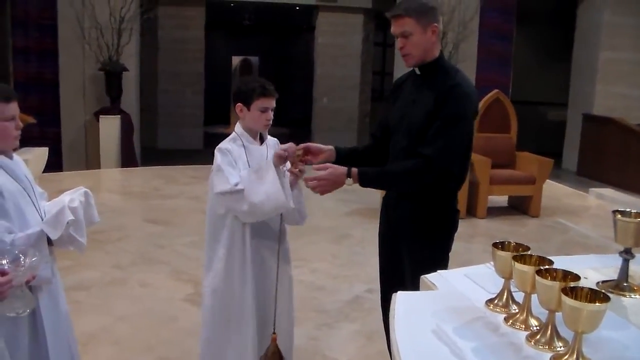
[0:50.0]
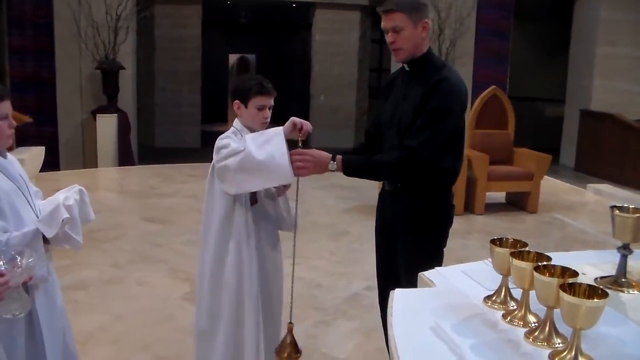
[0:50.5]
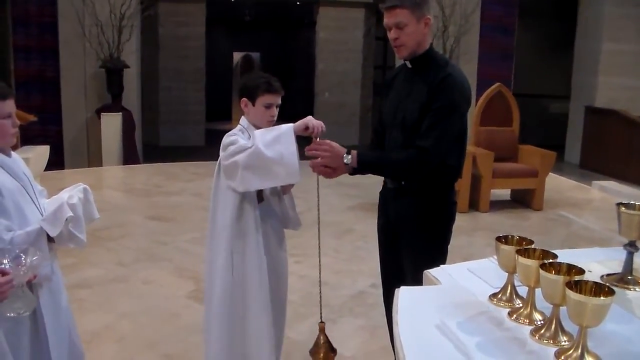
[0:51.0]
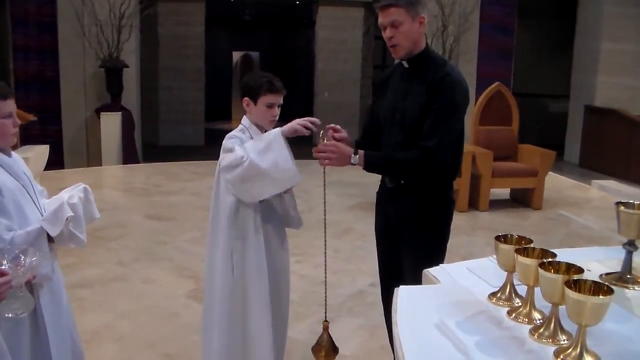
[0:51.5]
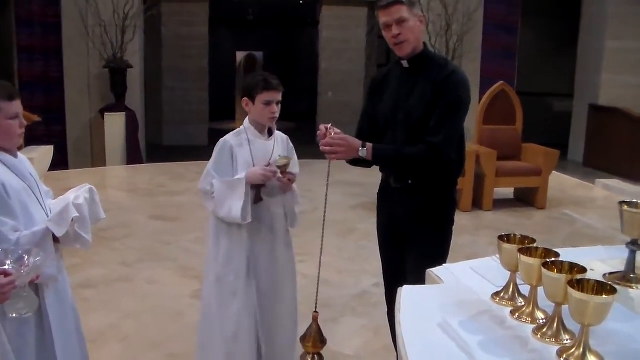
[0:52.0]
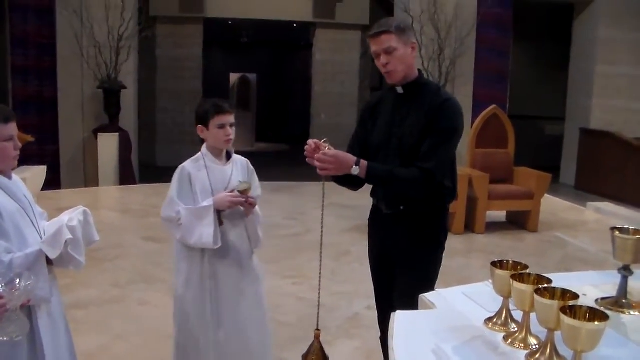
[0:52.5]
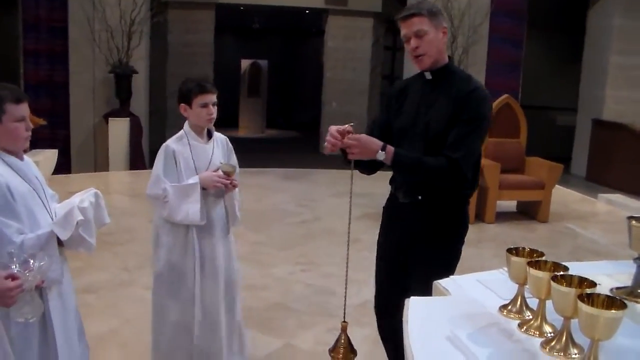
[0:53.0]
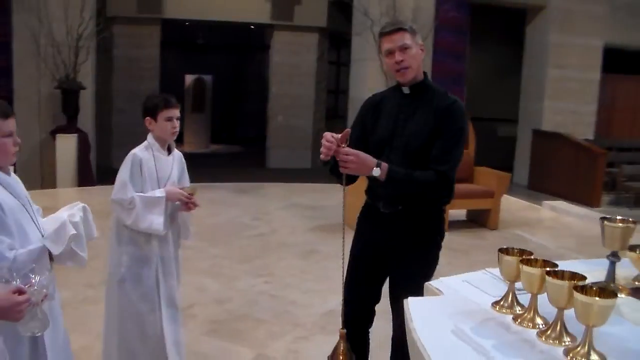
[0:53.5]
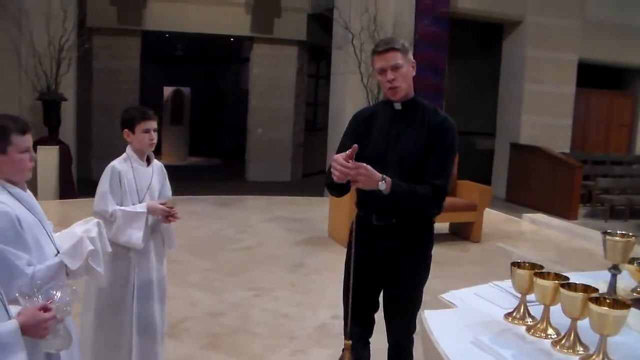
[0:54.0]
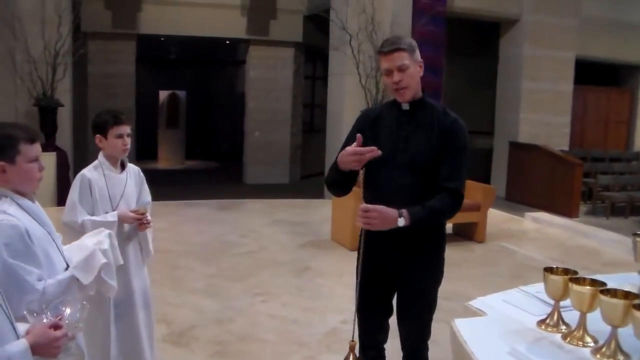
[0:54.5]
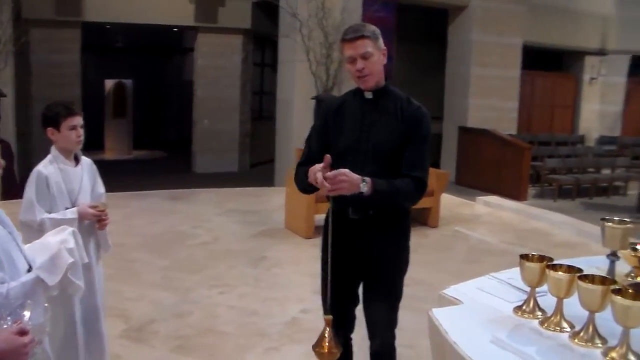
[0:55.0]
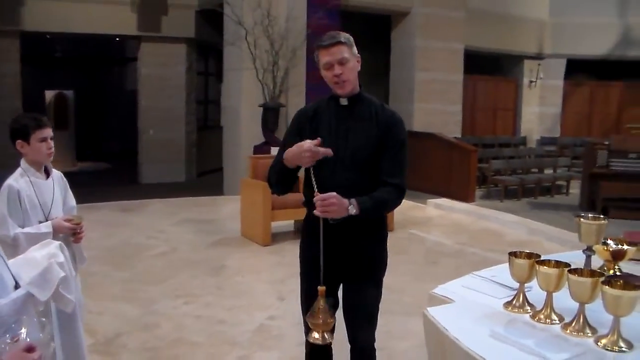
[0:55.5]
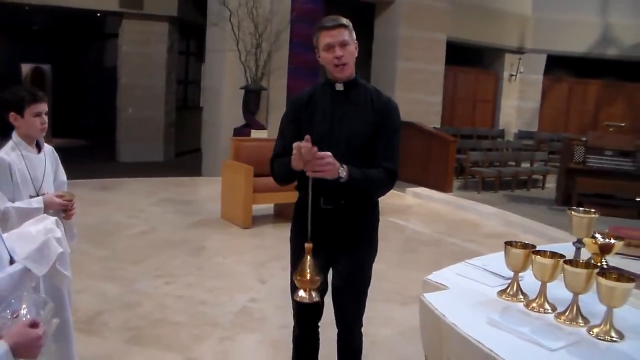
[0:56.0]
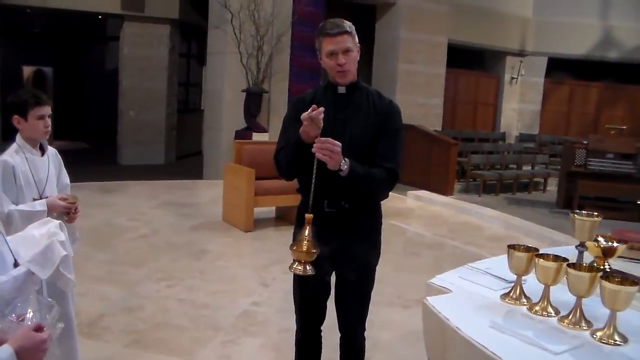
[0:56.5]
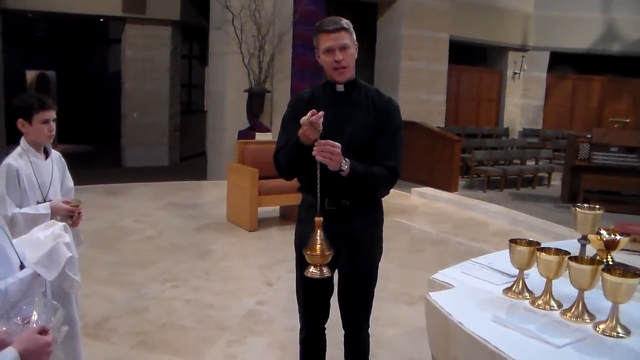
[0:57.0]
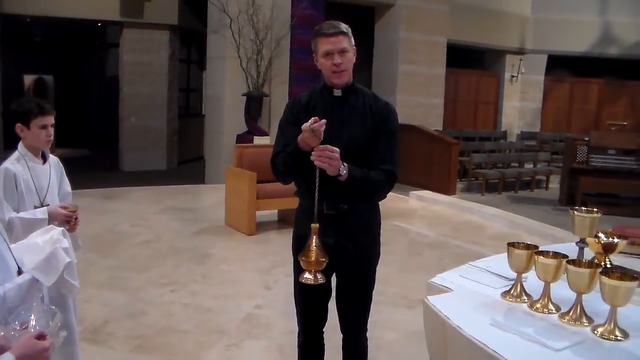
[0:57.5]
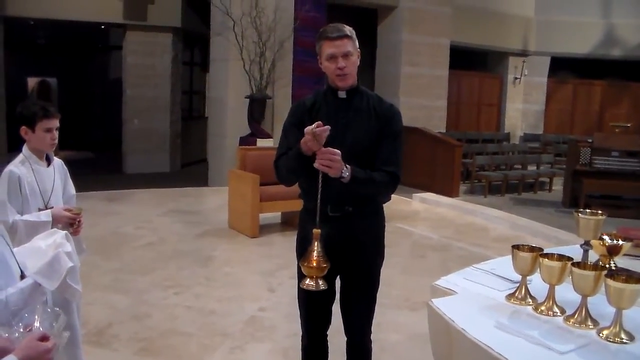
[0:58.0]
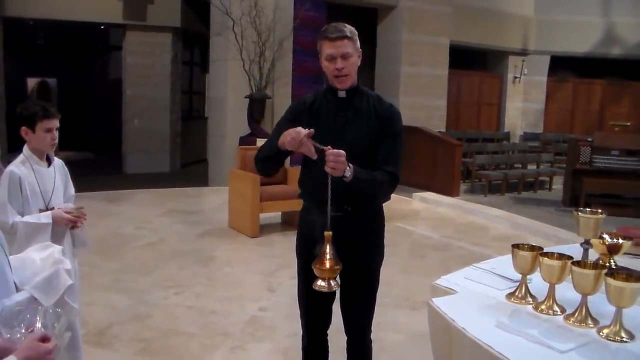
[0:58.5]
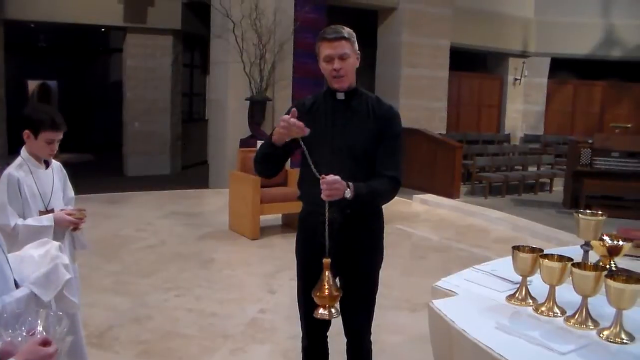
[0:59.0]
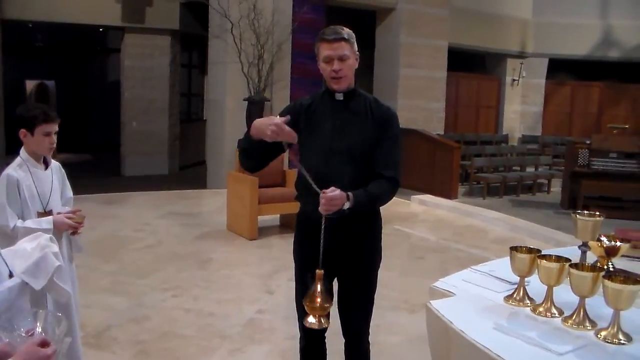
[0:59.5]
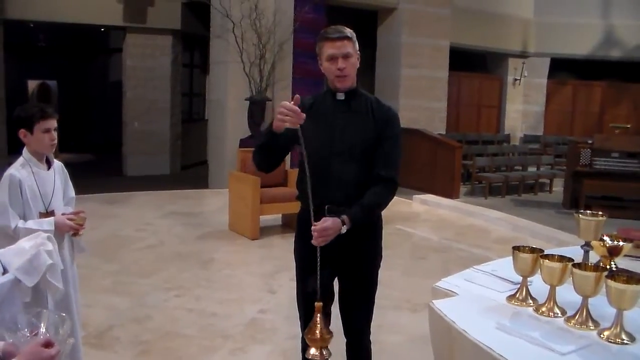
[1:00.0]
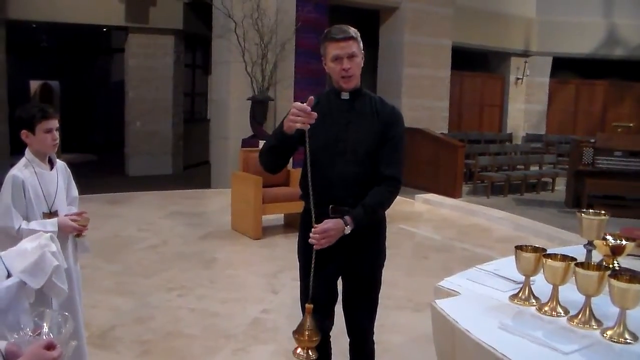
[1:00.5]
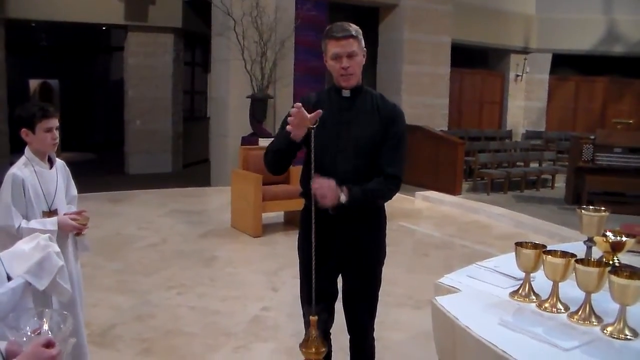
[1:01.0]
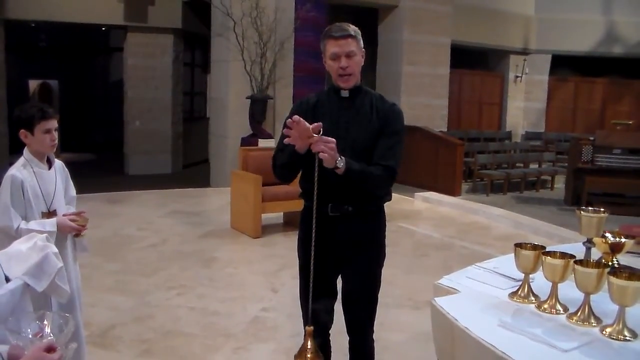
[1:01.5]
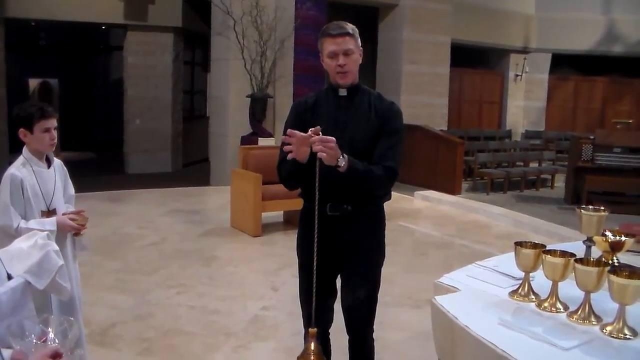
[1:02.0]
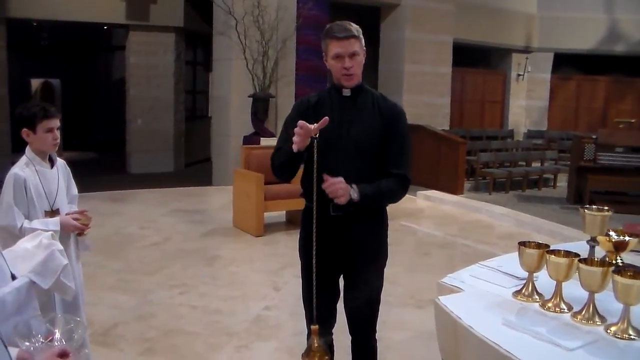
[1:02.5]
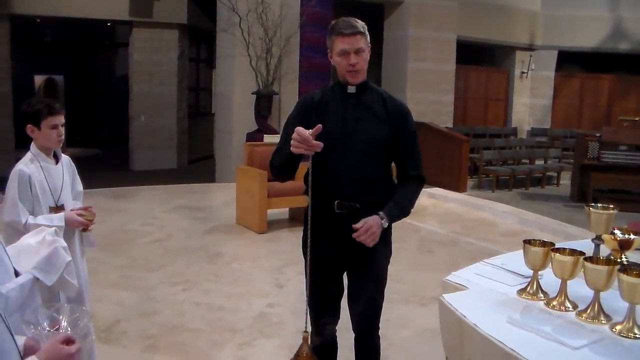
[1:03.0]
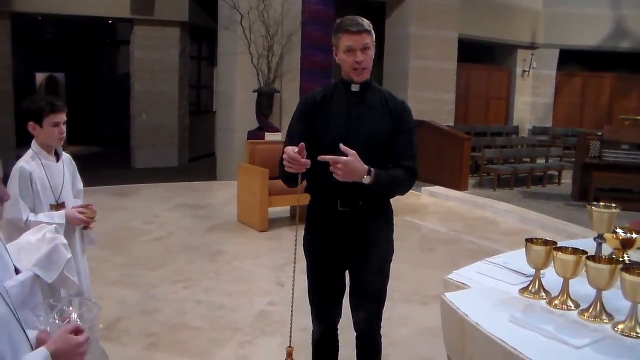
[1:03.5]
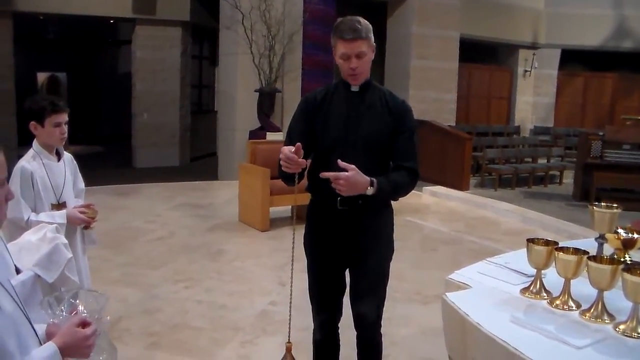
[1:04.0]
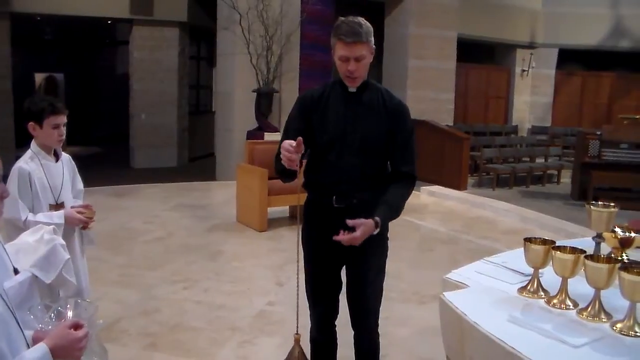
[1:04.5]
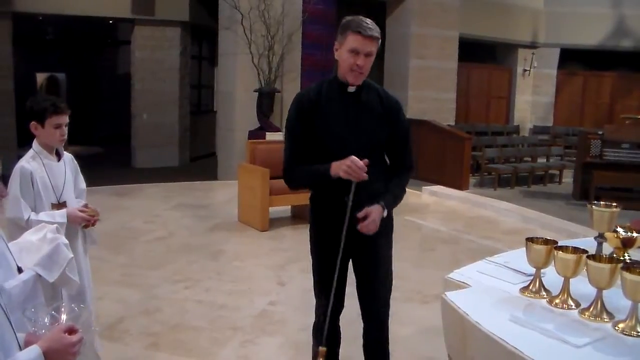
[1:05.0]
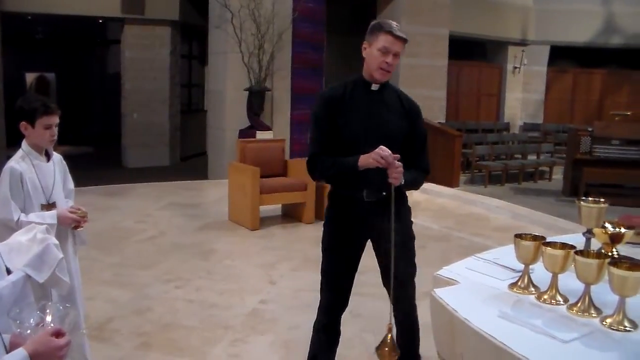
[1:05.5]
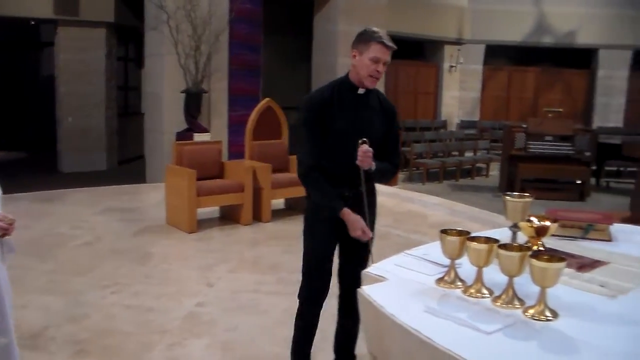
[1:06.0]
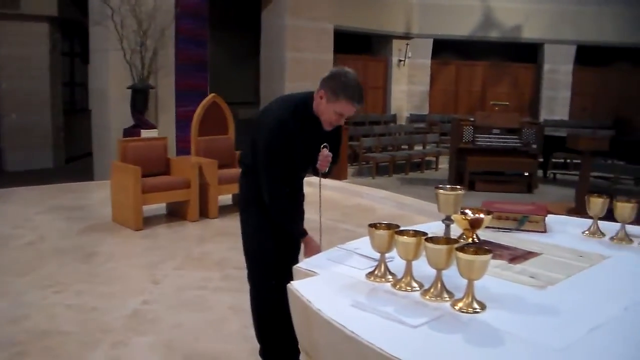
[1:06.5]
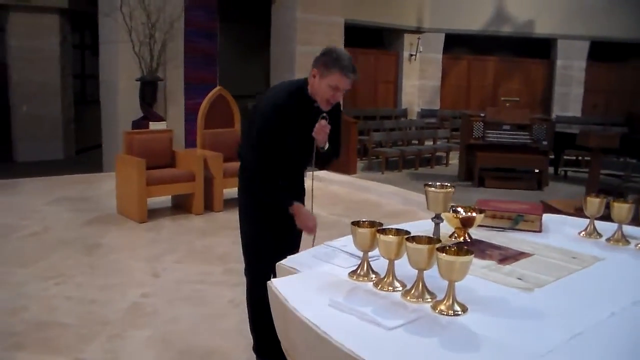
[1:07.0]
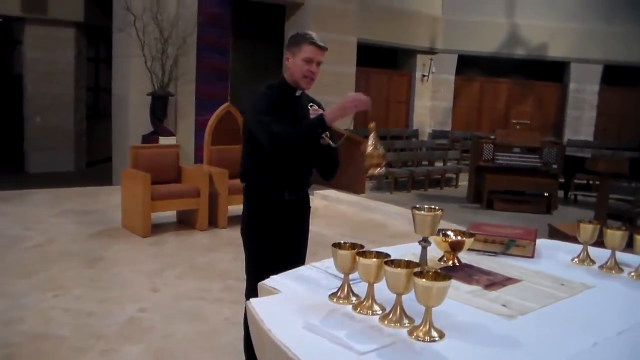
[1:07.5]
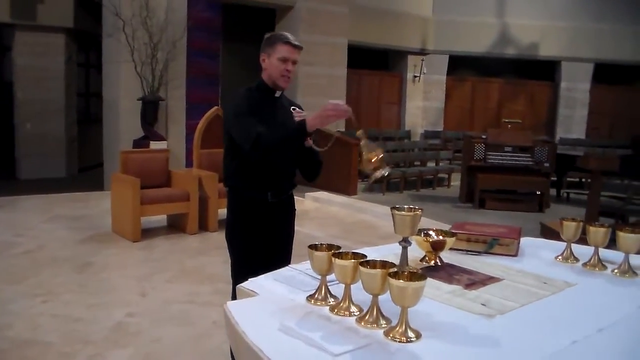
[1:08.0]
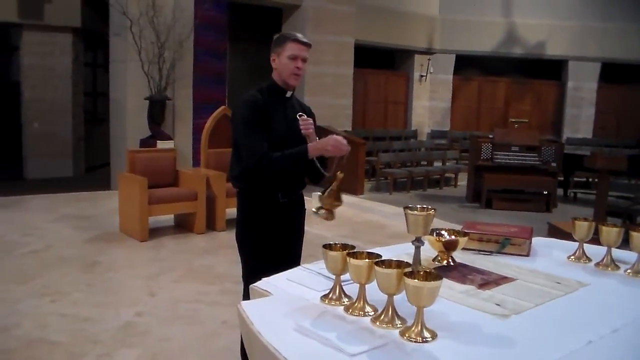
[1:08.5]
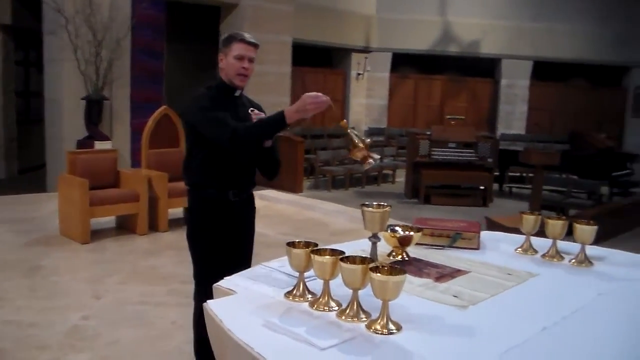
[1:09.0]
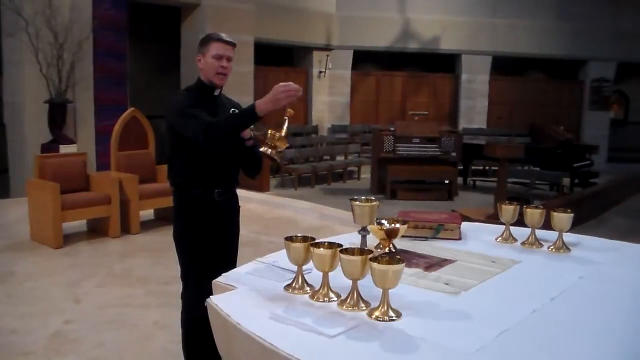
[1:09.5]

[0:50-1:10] With the incense burner on its rope now in the priest's hands, the priest turns towards the camera and the boy falls back in line with the other children. The priest hangs the rope from his thumb and wraps it around his hand to bring the incense burner up, seemingly explaining this to the camera, then does the opposite, unwinding the rope back down towards the ground. He turns to the table, bows in a religious sort of ceremony, then brings the dangling incense up with his right hand and swings the burner backwards and forwards over four goblets arranged neatly next to each other on the table, continuing to talk towards the camera as he does so. All the items on the table can now be seen in full view. In the rest of the room there is an organ, two chairs arranged in the centre of the room, and chairs placed all the way around the outside of the room.